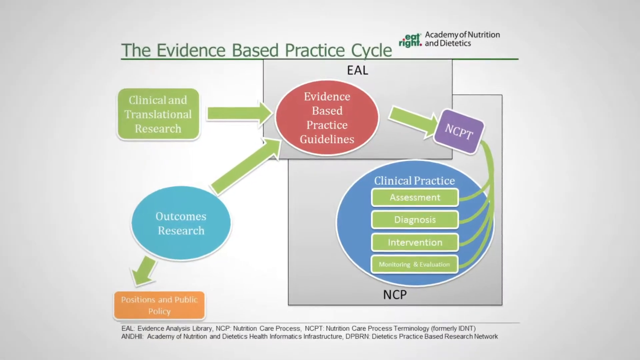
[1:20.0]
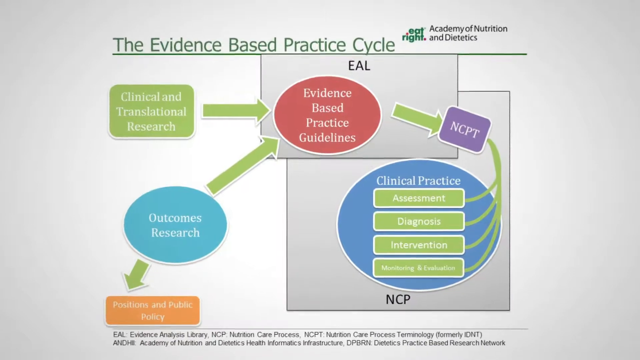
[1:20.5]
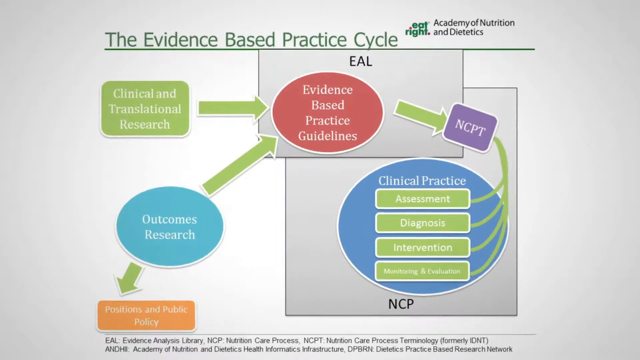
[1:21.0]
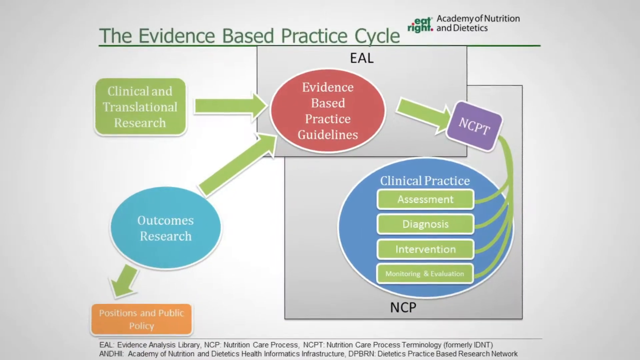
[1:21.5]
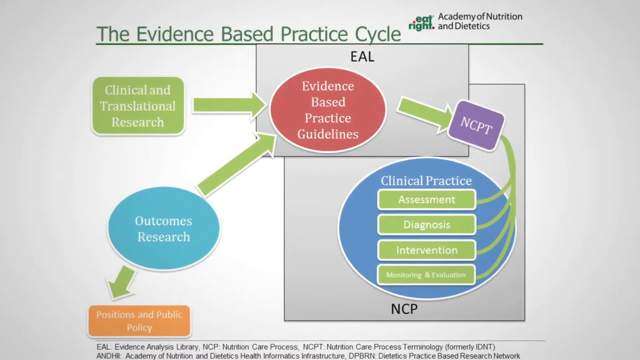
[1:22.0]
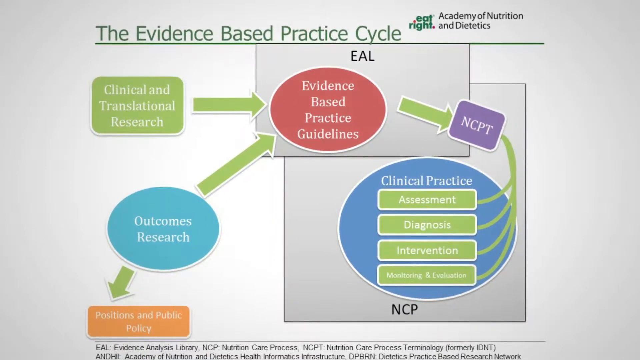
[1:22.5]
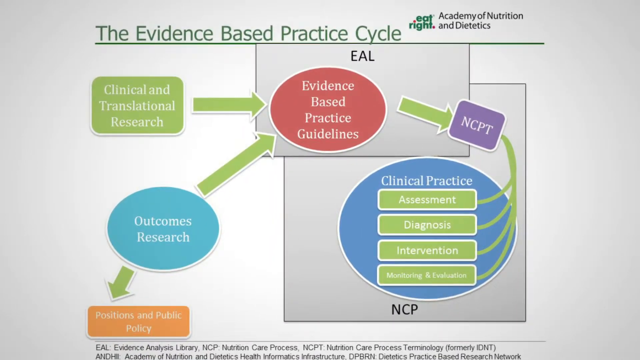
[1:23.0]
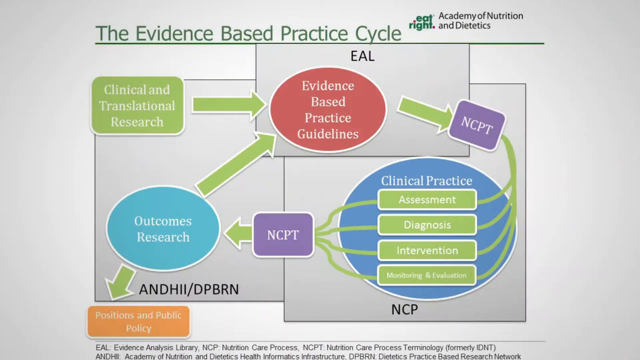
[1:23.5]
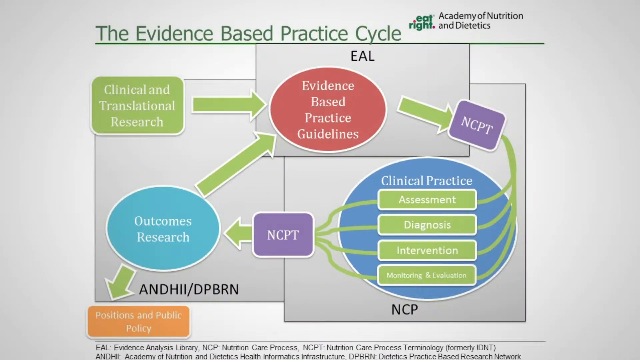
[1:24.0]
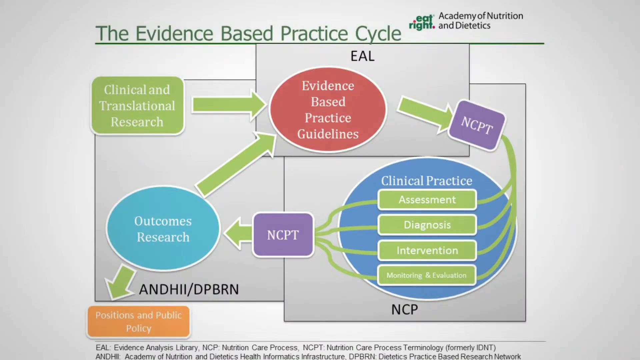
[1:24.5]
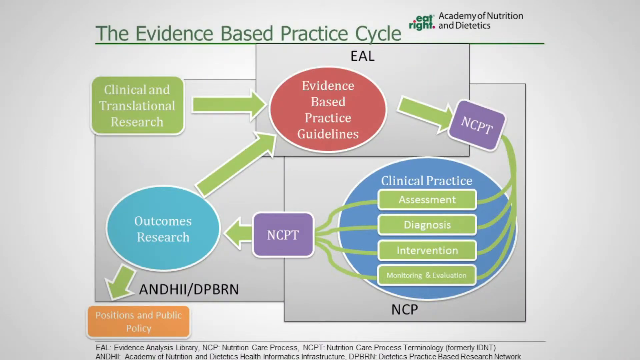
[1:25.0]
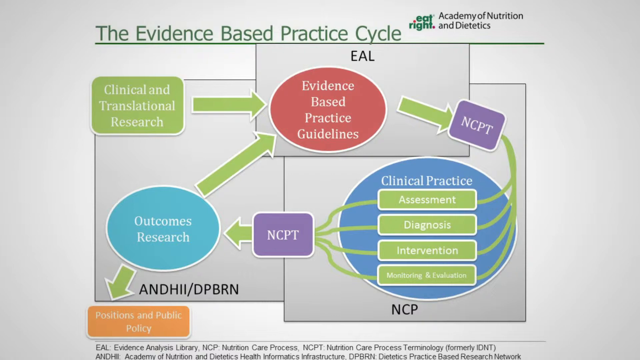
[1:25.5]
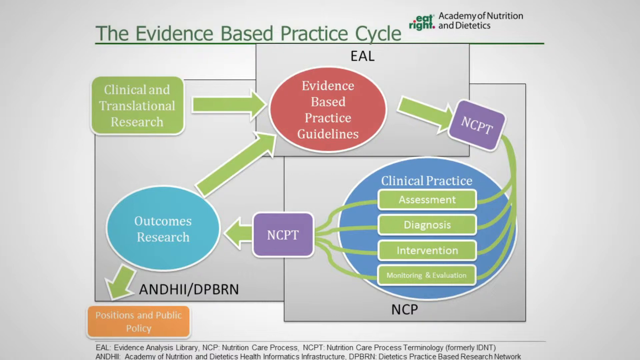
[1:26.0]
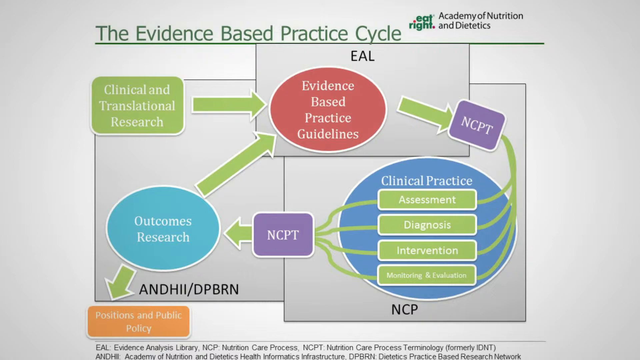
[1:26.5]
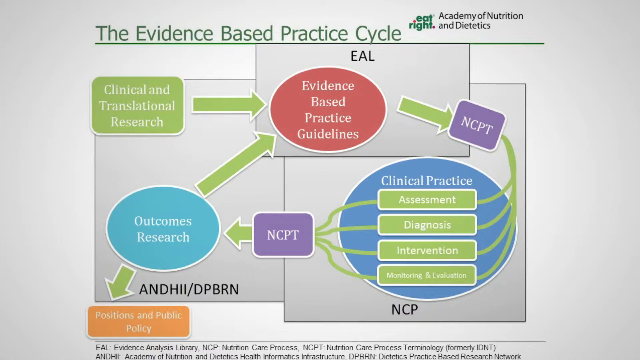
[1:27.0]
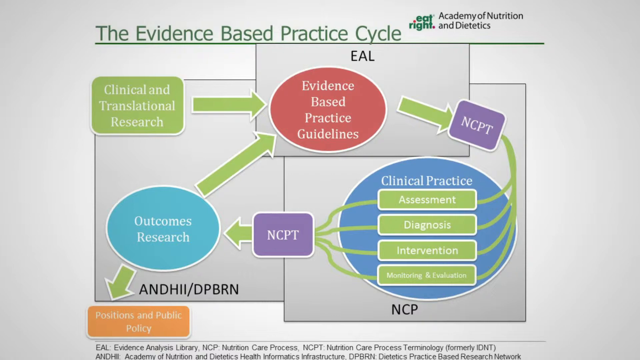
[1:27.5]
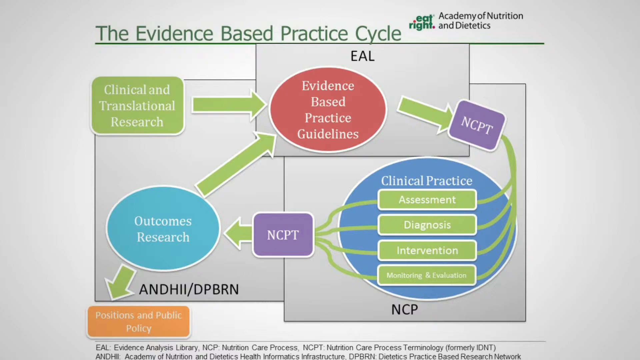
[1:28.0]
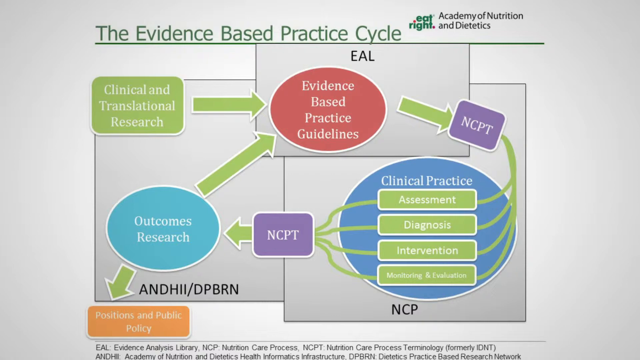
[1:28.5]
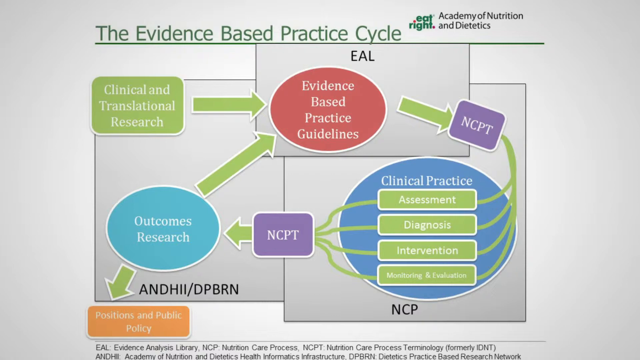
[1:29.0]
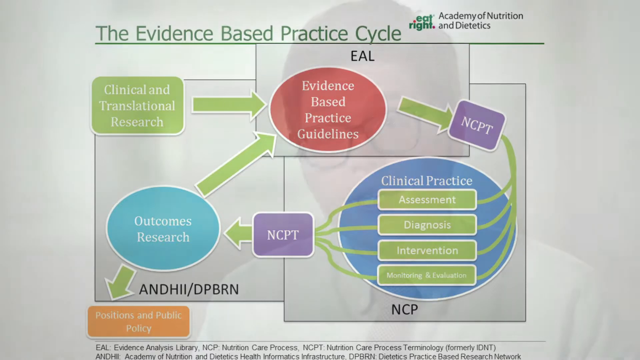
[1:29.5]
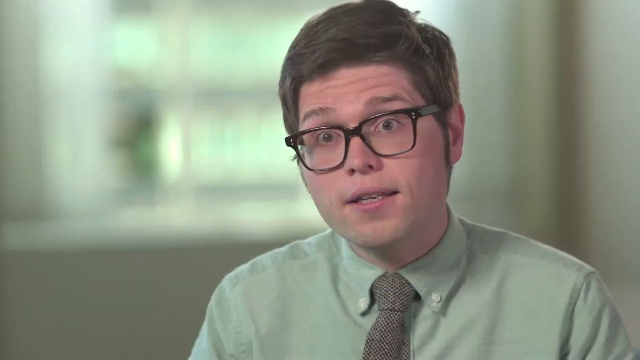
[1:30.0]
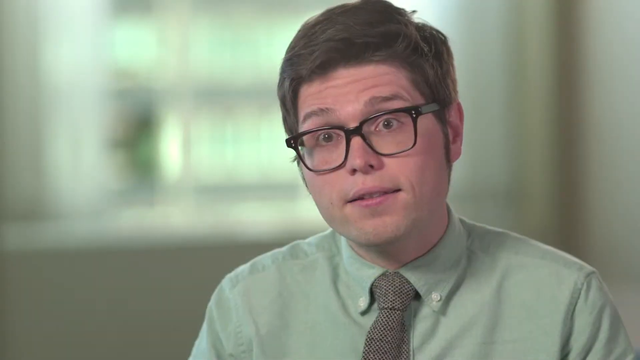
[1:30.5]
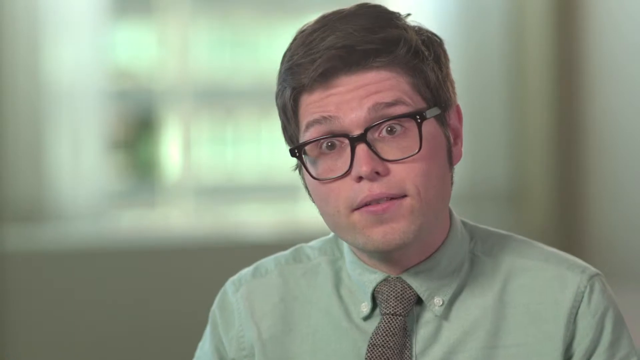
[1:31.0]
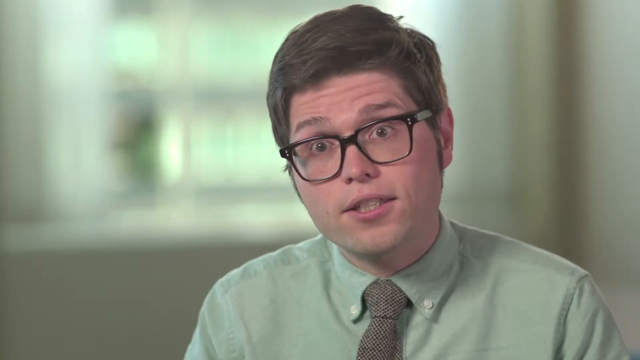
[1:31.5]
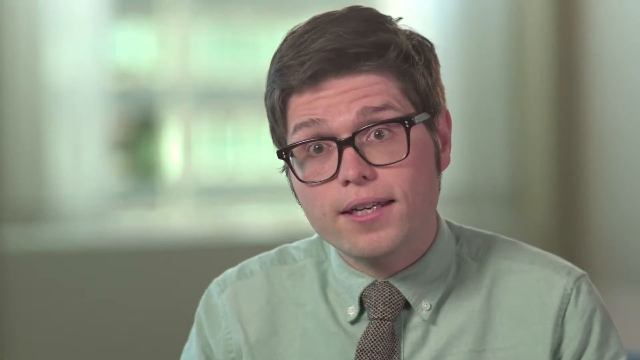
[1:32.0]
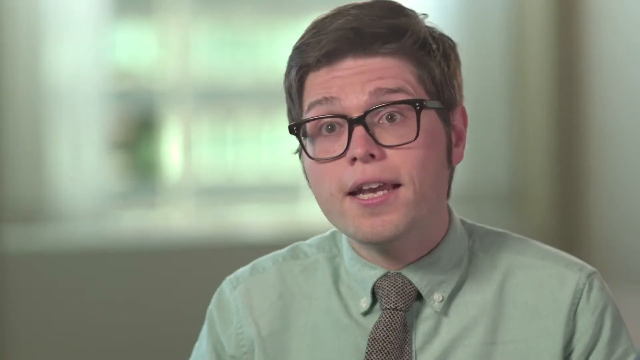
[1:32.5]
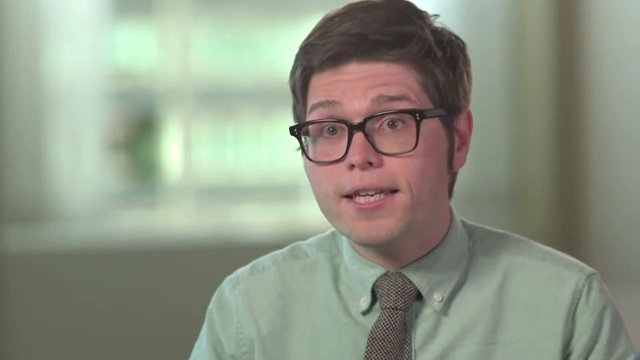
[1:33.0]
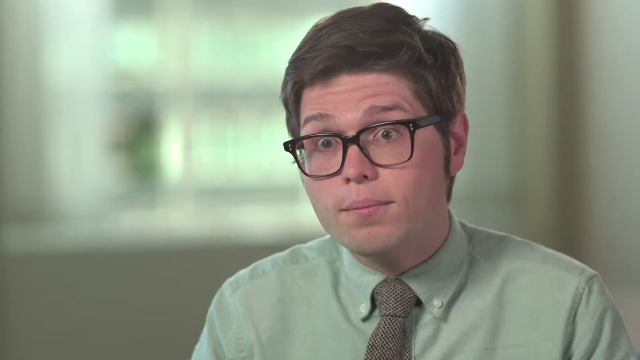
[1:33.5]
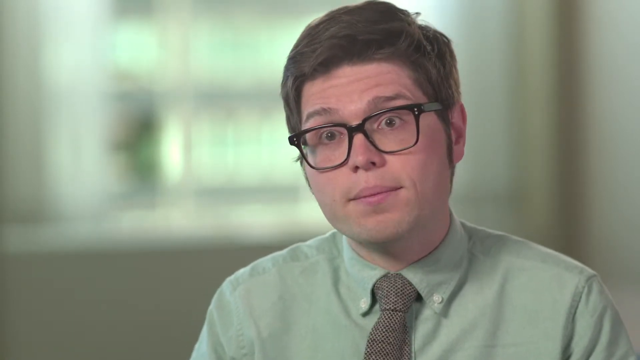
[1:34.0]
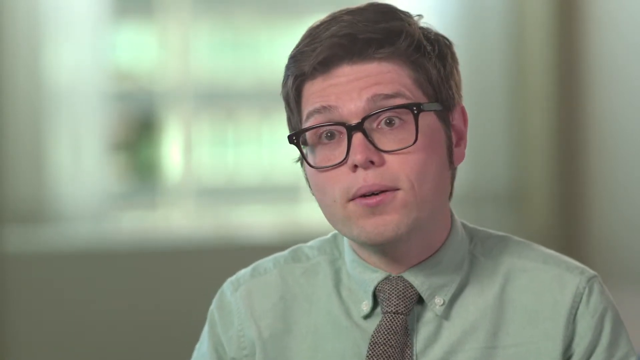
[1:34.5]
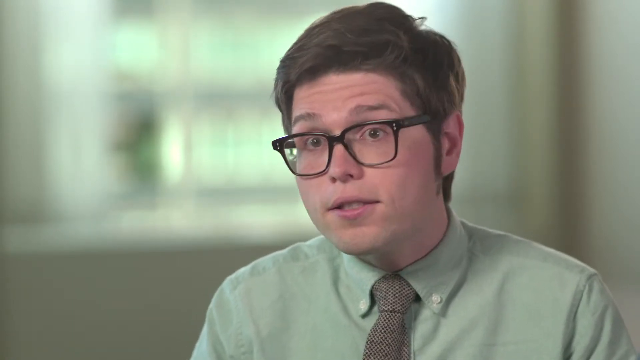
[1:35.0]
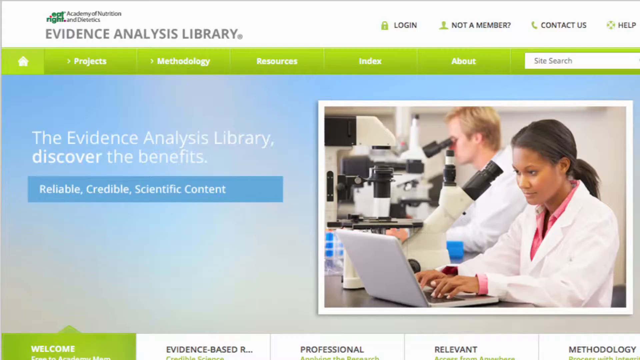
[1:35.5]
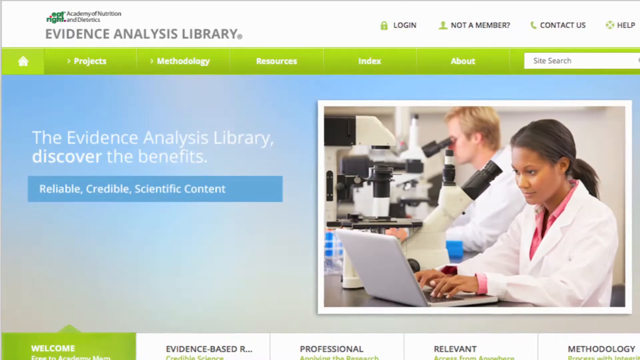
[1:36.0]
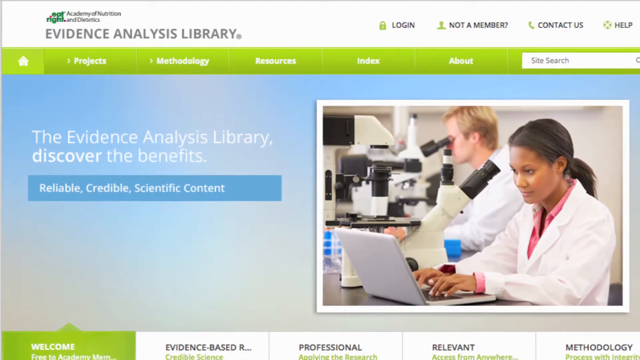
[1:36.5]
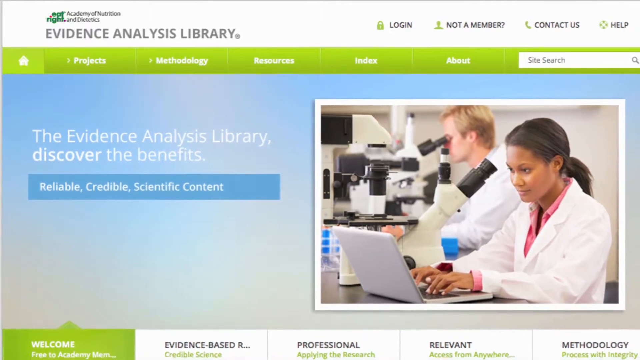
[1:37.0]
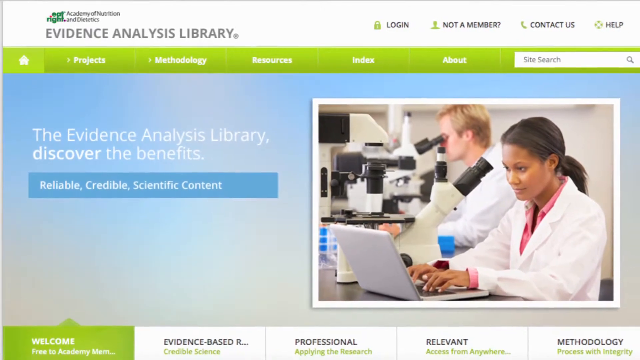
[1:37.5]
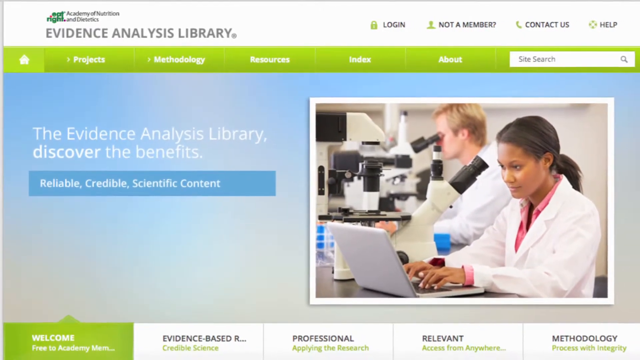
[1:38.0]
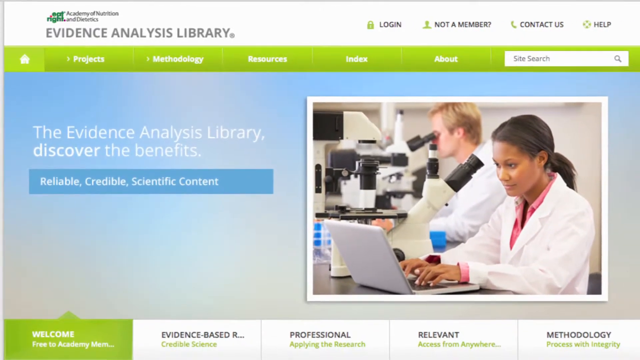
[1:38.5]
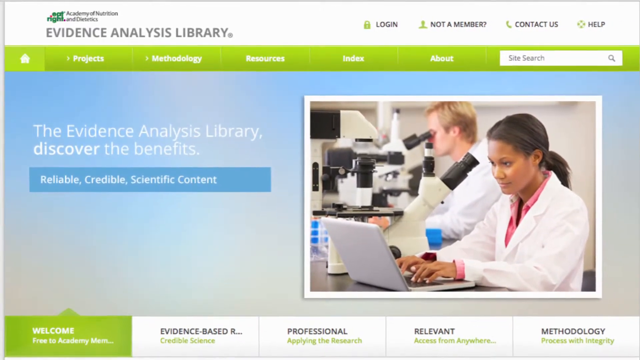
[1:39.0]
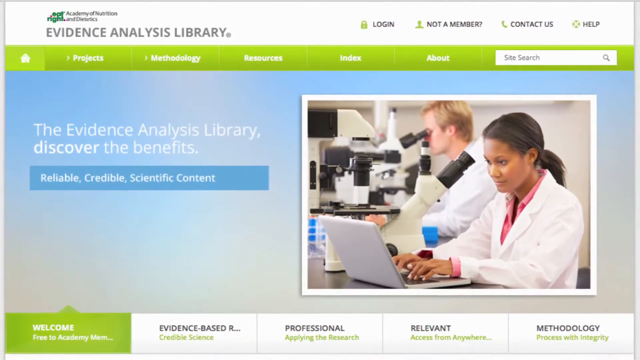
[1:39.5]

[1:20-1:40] A white background has a large green line toward the top, with big letters reading "the Evidence-Based Practice Cycle". A small Eat Right Academy of Nutrition and Dietetics logo is on the right side above the line. A gray rectangle has the letters "EAL" at its top. A red oval with white print says "Evidence-Based Practice Guidelines". To the left, a green box says "Clinical and Transitional Research" and points to the Evidence-Based Practice Guidelines. Below that, a blue oval says "Outcomes and Research", with one green arrow pointing up to the Practice Guidelines and one pointing downwards. To the right of the Evidence-Based Practice Guidelines is a small rectangle reading "NCPT" in purple, with several lines coming out of it to a larger oval at the bottom that says "Clinical Practice Assessment, Diagnosis, Intervention, and Monitoring" and more.